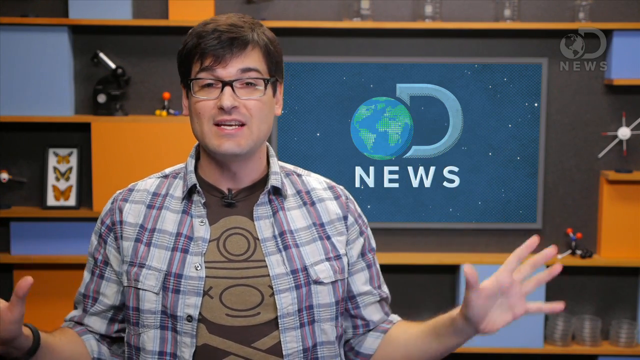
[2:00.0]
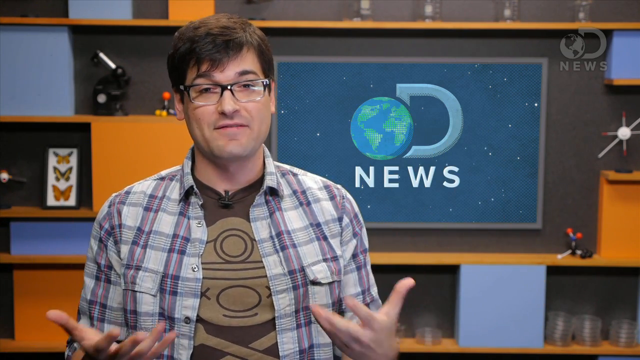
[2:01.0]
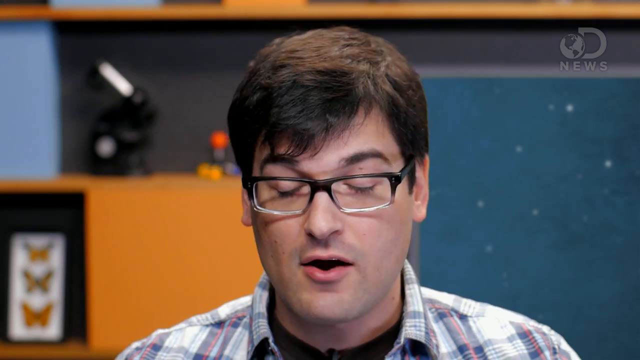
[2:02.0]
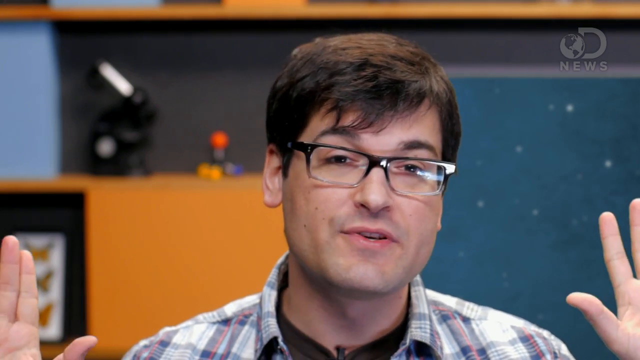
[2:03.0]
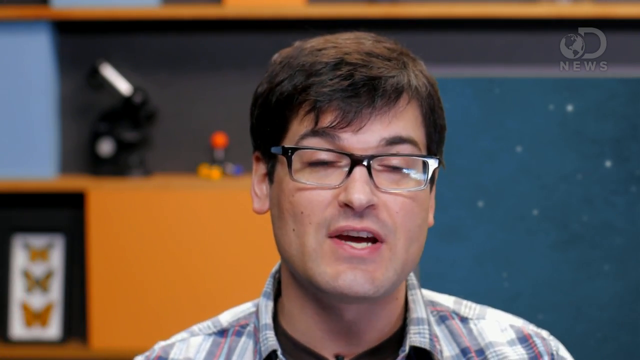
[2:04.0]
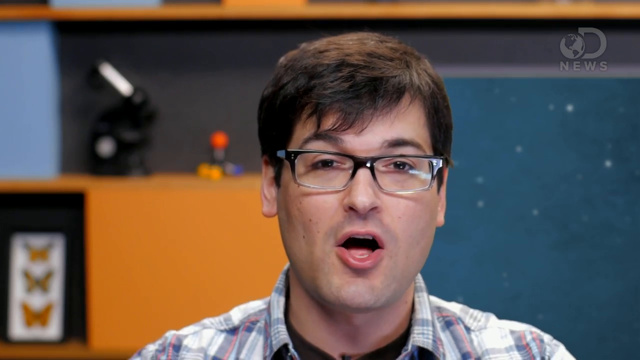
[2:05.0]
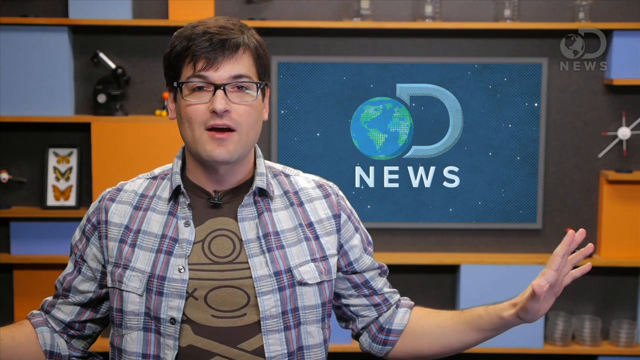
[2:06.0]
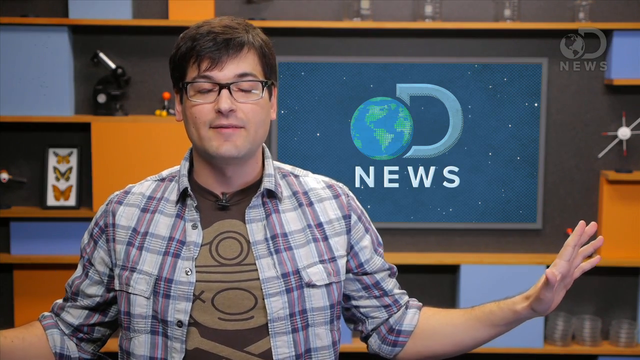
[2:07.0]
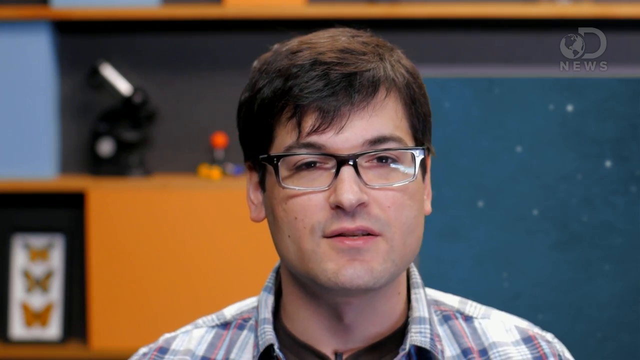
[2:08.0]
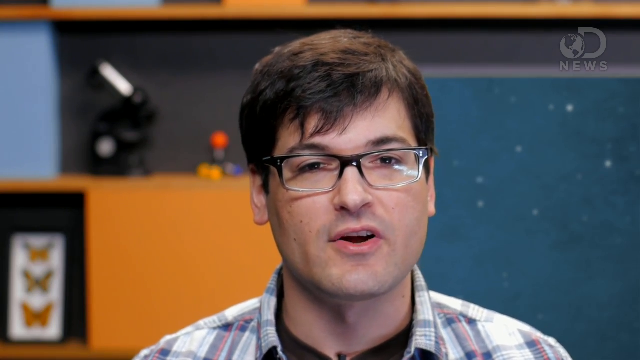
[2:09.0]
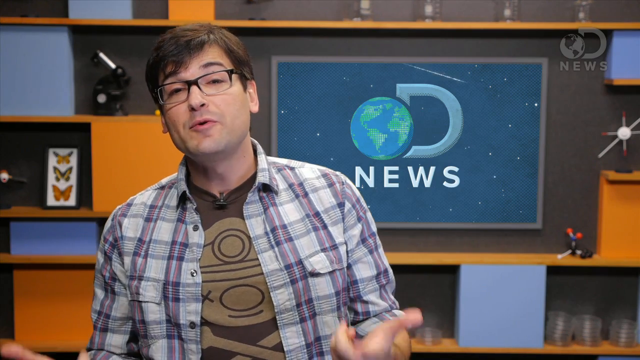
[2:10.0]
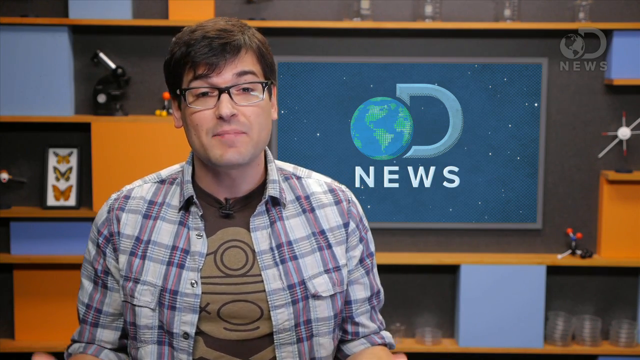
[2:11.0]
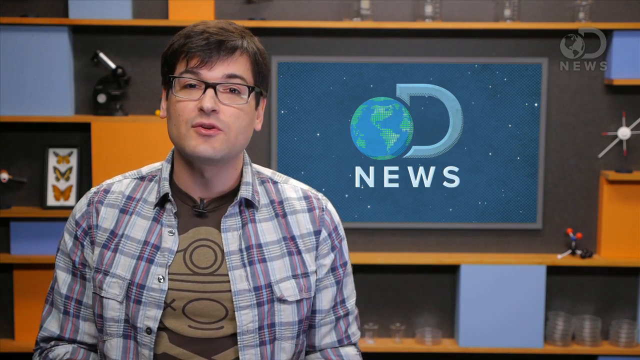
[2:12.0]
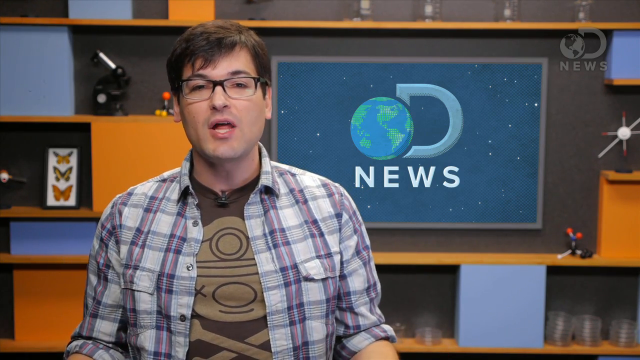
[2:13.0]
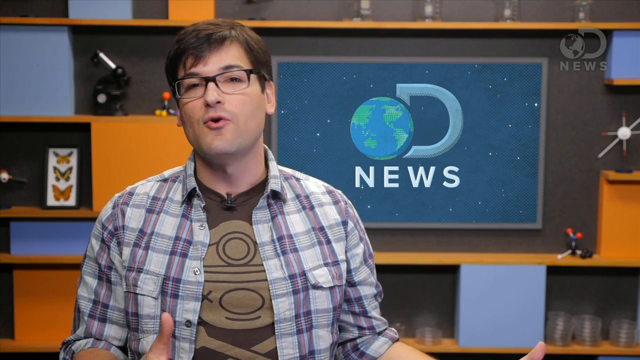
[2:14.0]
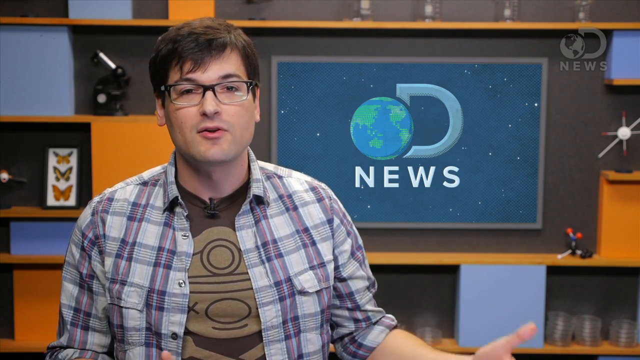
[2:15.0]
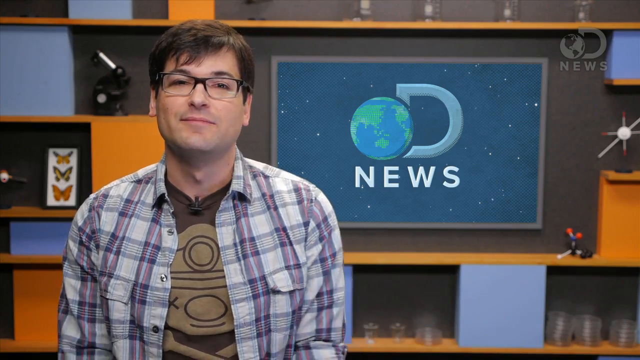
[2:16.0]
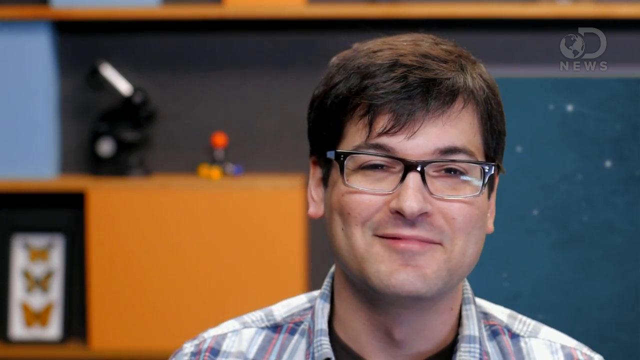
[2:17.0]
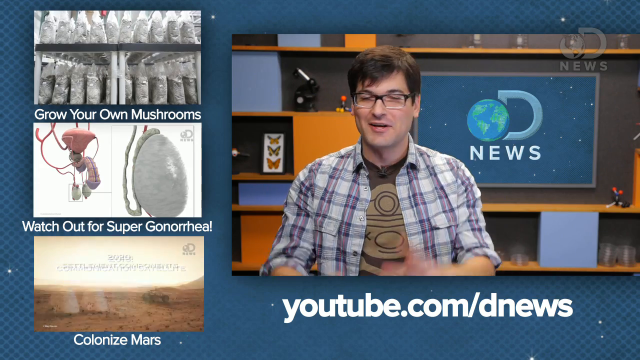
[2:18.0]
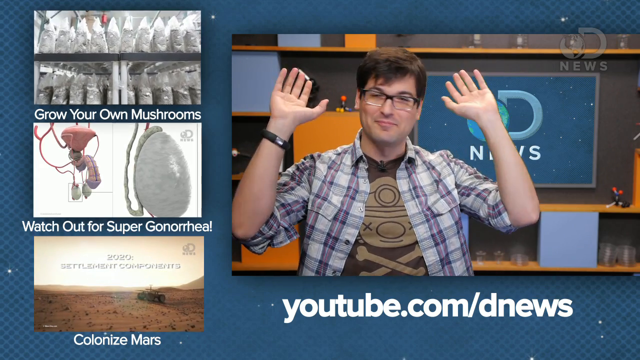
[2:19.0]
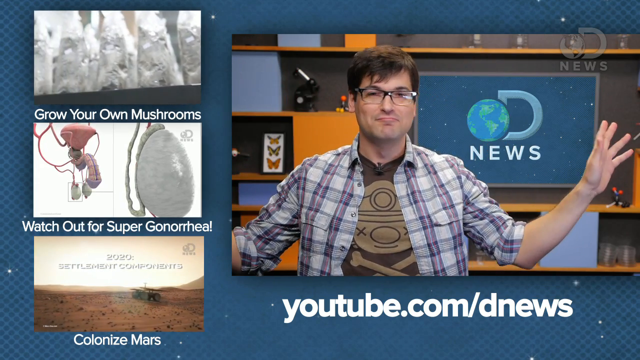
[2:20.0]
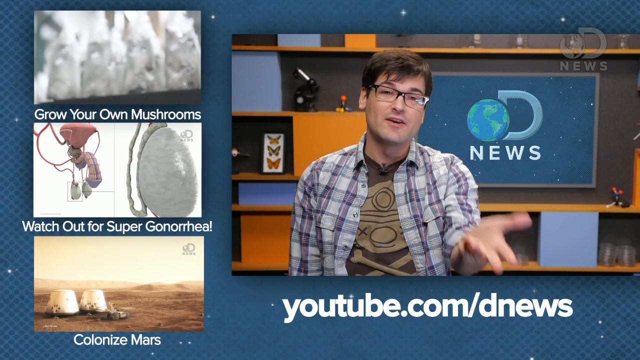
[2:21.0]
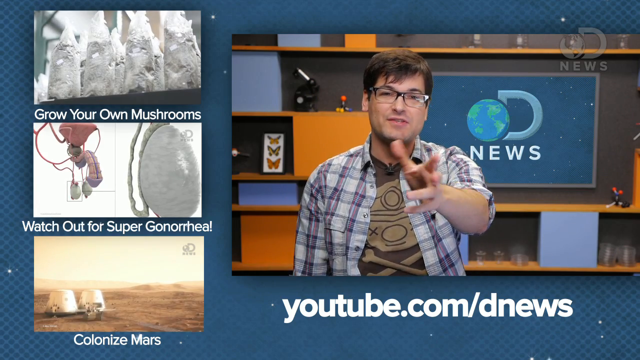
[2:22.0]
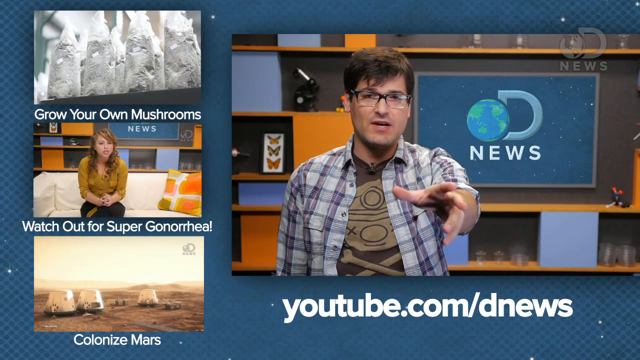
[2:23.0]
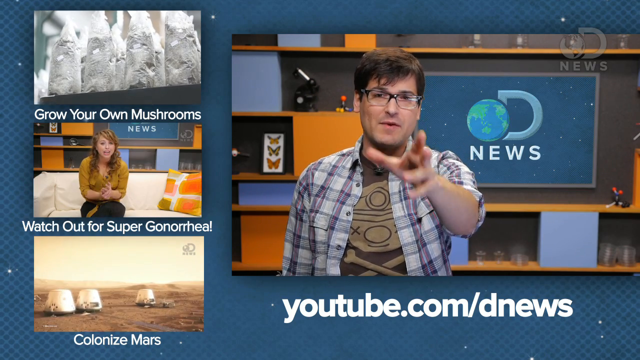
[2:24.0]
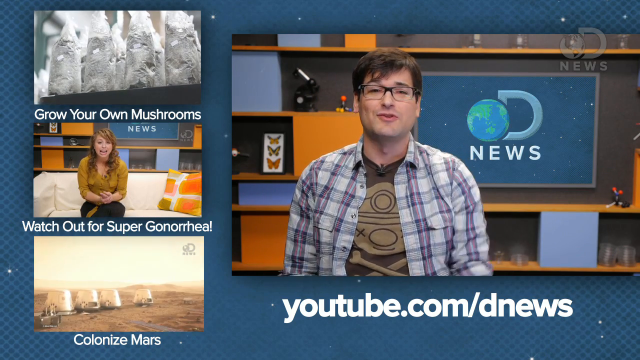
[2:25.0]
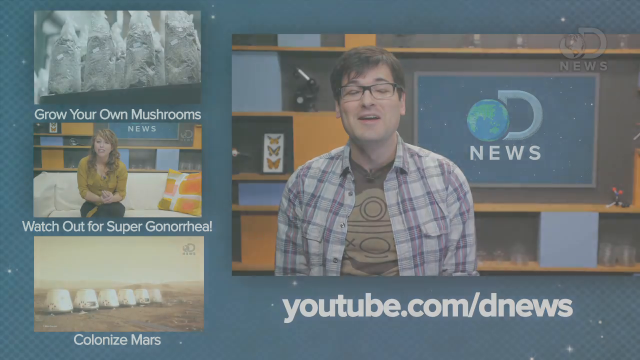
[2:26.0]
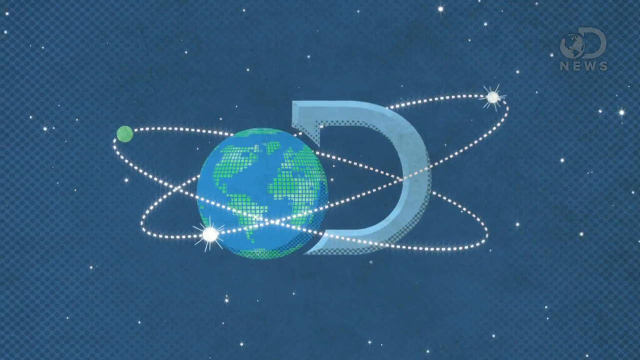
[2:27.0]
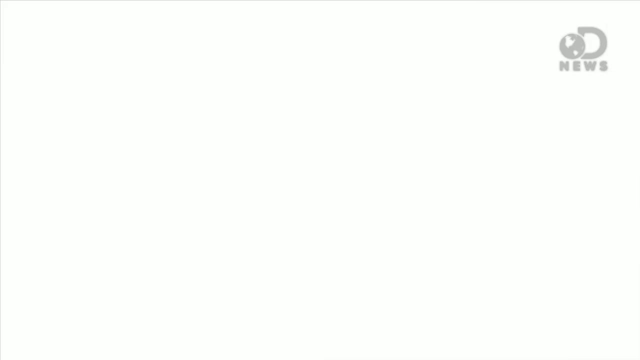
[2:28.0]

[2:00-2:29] Anthony Carboni continues speaking with his hands up near his chest, palms facing the camera. He brings his hands down a little, turns the palms upward, then brings them back up with palms facing the camera, now at about head level. He moves his hands out to the side with the palms facing away from him. As he talks he keeps moving his hands, which are hard to see because they are out of the shot. He smiles. Graphics pop up on the left-hand side of the screen next to him: one says "grow your own mushrooms" with a picture of a bunch of stuff in bags, and one below it shows a picture of intestines and says "watch out for super gonorrhea." Below him is a website address reading "youtube.com backslash D news." As he speaks, his palms face sort of upward to the sky; his head is tilted to his left and he laughs and smiles, moving his hands in front of his face, out to the side, and back down. He holds his left hand palm upward with fingers out and points to the camera, then moves it in front of him and points to the camera again. The D news logo appears.